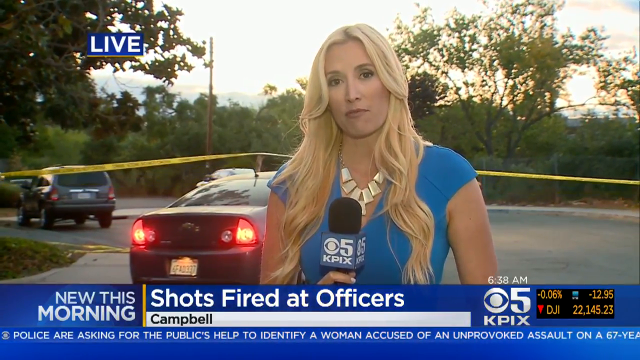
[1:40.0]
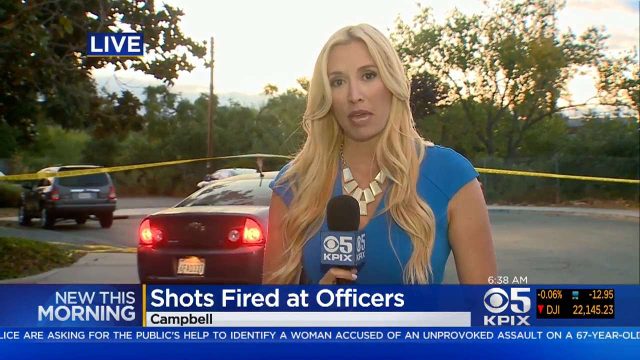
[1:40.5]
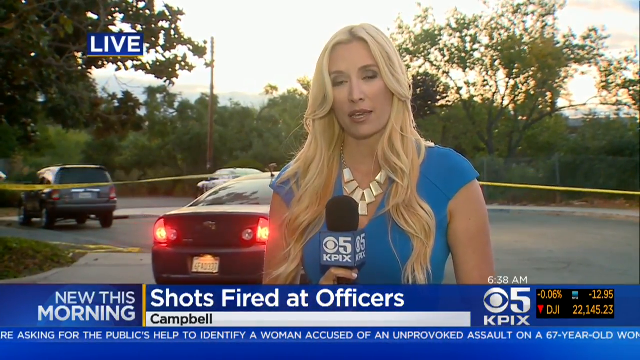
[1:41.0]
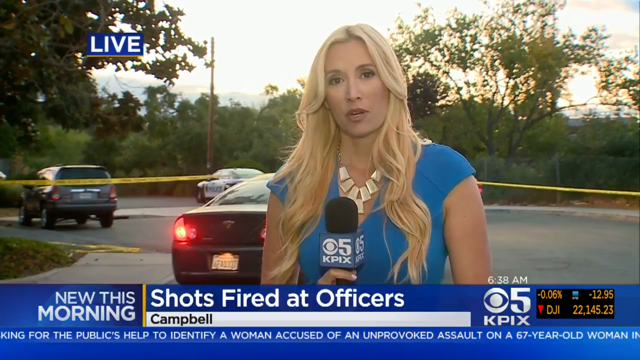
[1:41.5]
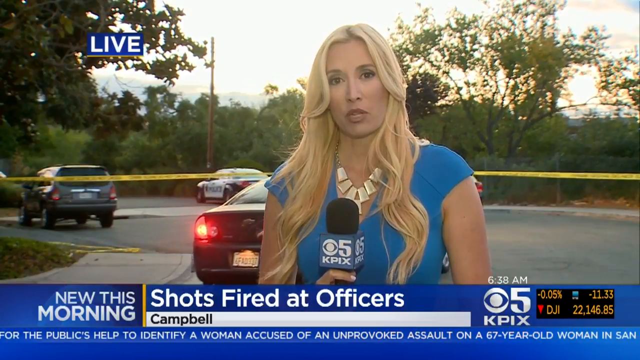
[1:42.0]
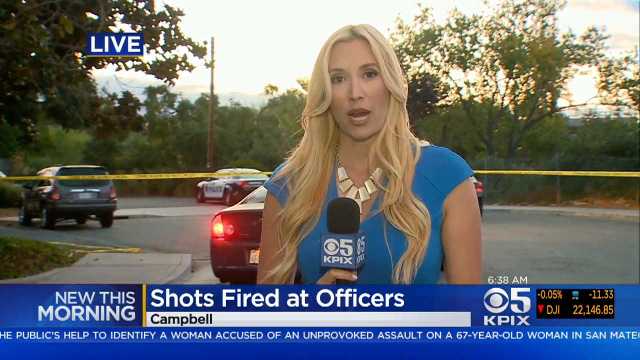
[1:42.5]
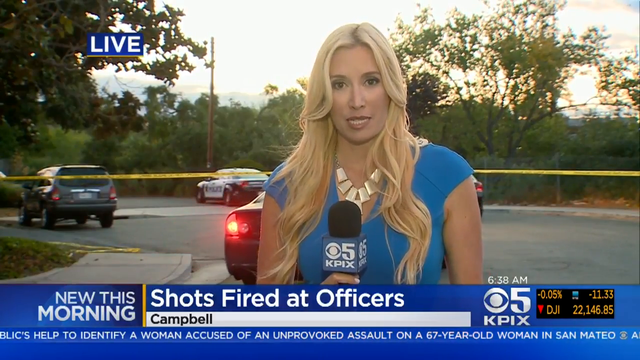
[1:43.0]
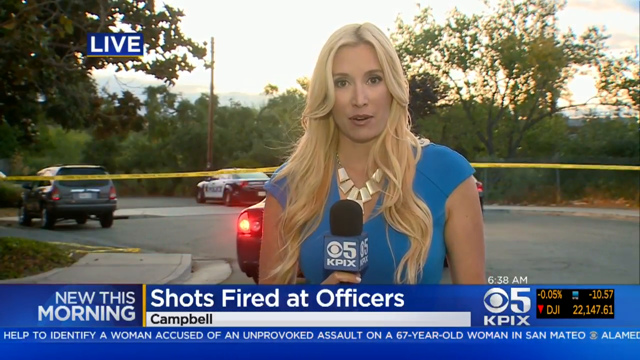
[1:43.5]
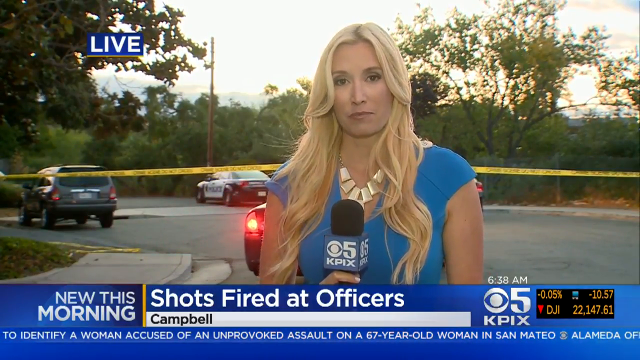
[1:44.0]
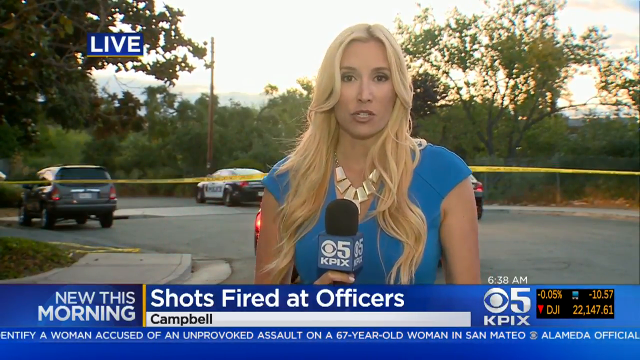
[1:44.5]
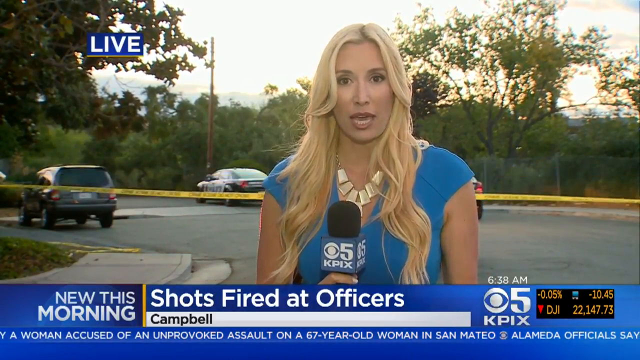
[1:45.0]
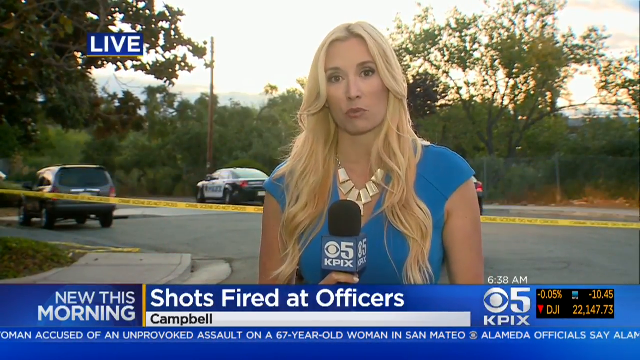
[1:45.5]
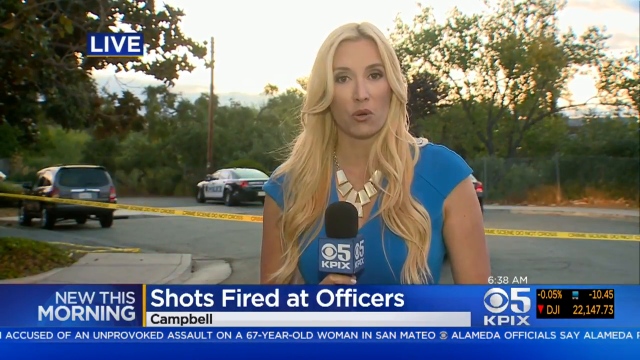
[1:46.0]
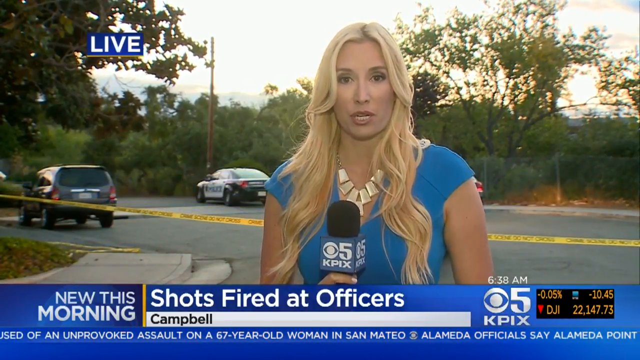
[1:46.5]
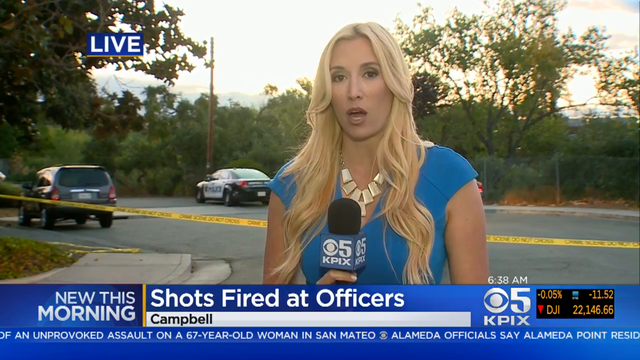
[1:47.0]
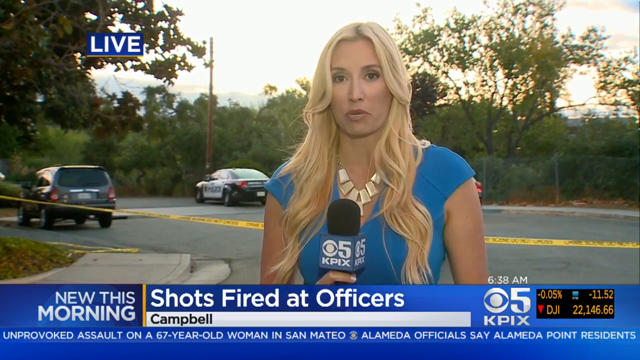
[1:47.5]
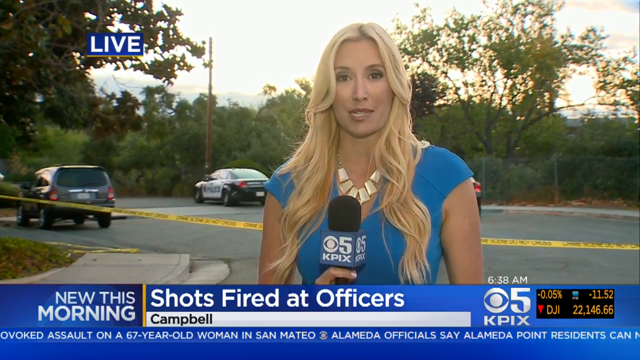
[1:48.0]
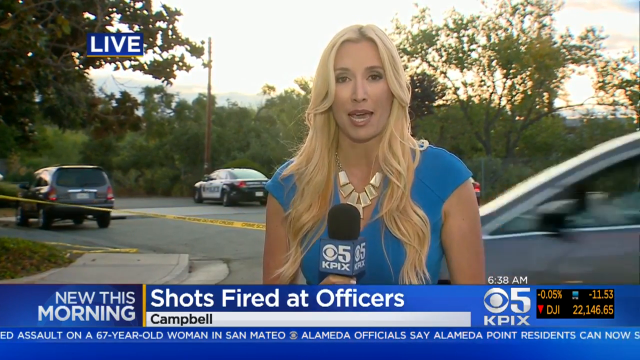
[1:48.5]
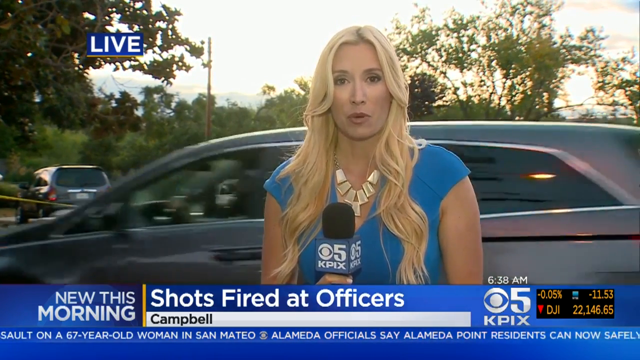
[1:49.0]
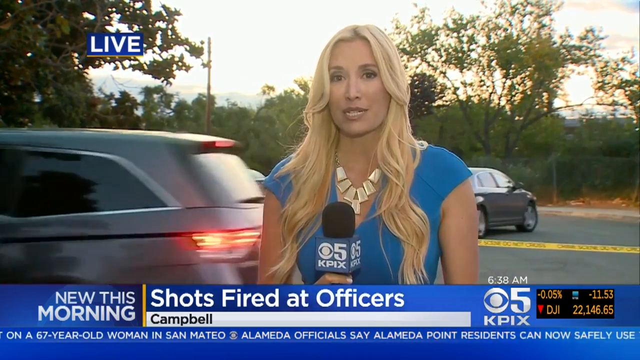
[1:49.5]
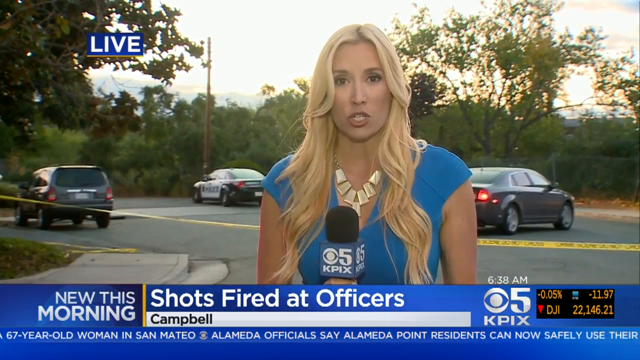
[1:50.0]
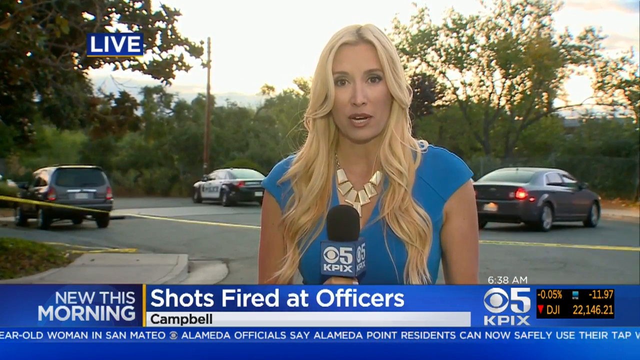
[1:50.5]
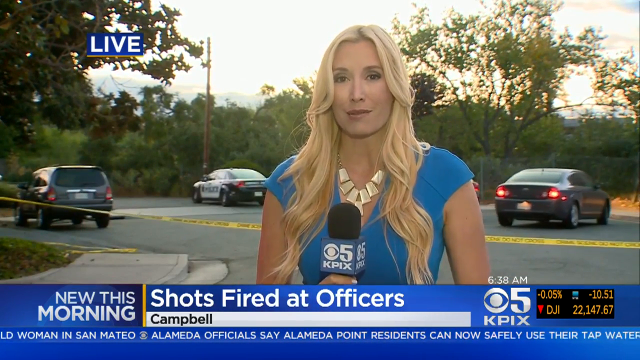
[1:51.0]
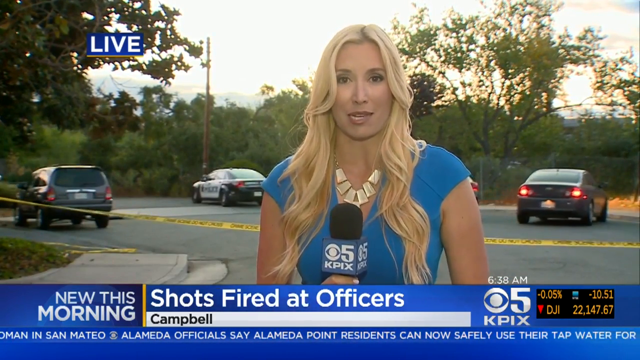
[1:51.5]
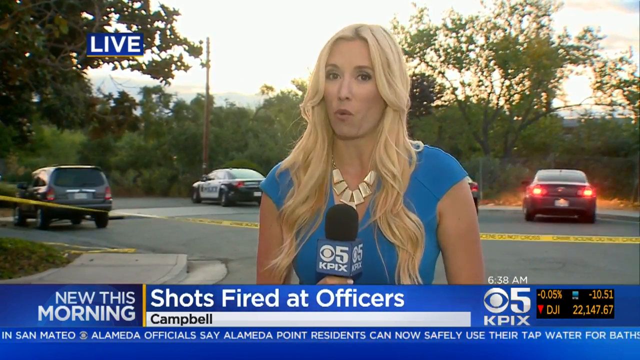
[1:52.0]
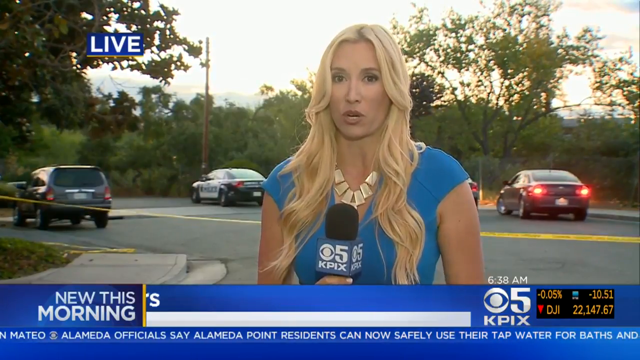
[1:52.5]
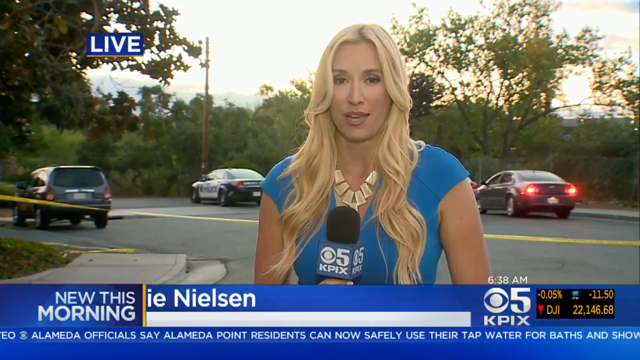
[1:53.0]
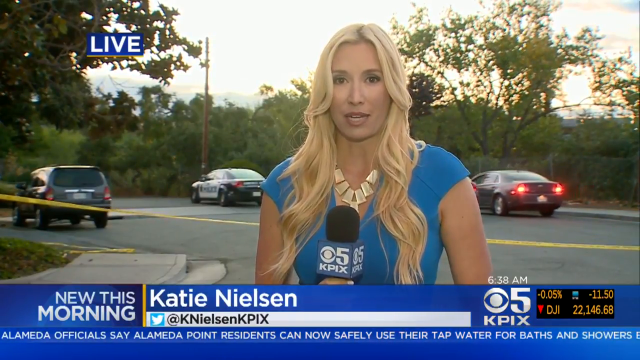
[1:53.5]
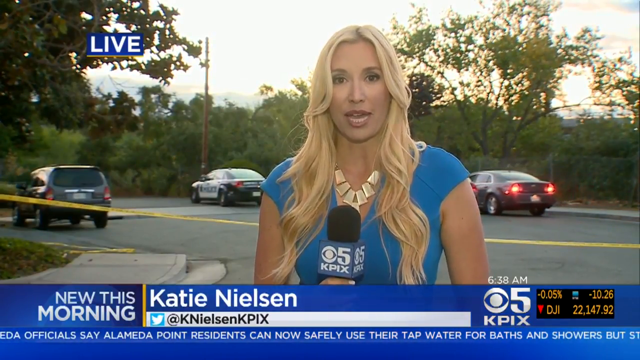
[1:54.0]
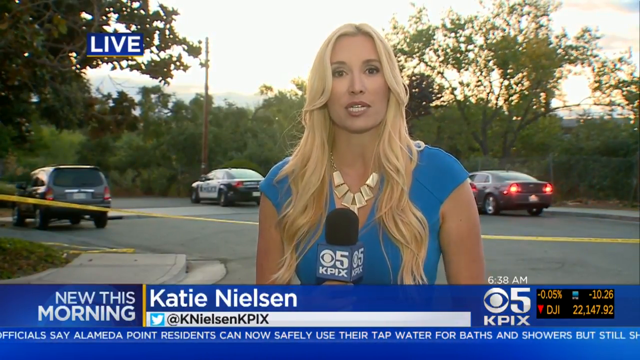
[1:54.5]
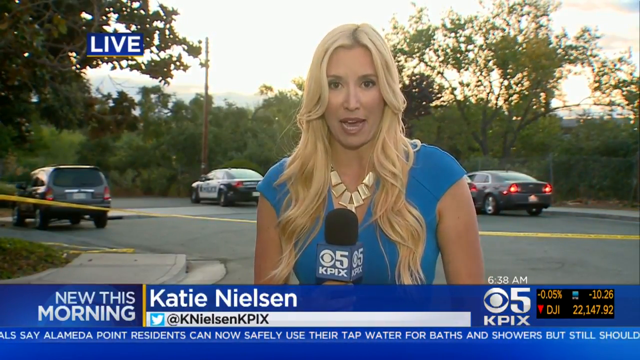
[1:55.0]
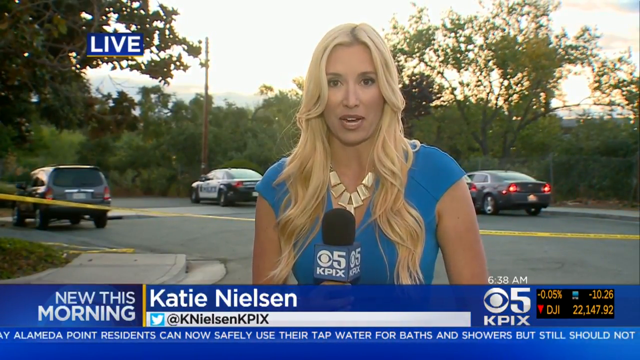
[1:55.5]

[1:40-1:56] The car that went through the tape moves to the side of the police van while the woman continues her report. One vehicle passes from left to right. The car that passed through the tape is then seen parked near the trees. It seems a bit windy, as the trees are shaking, and the woman continues reporting.